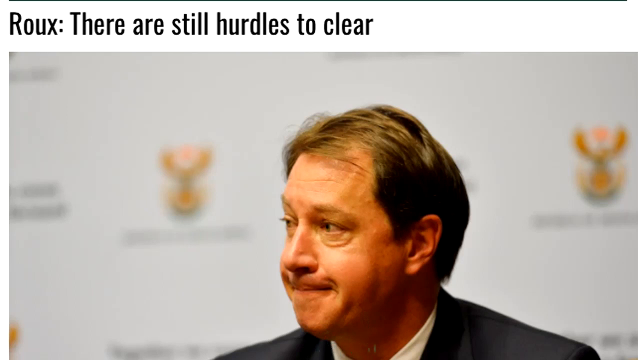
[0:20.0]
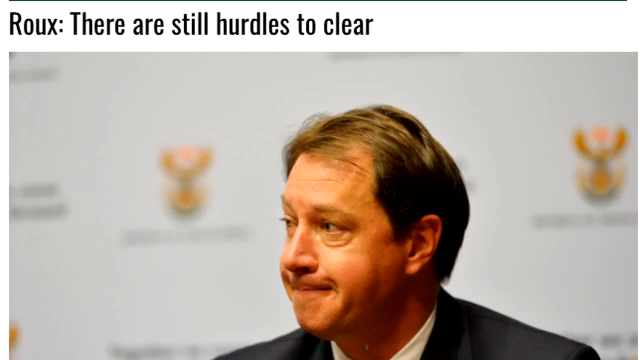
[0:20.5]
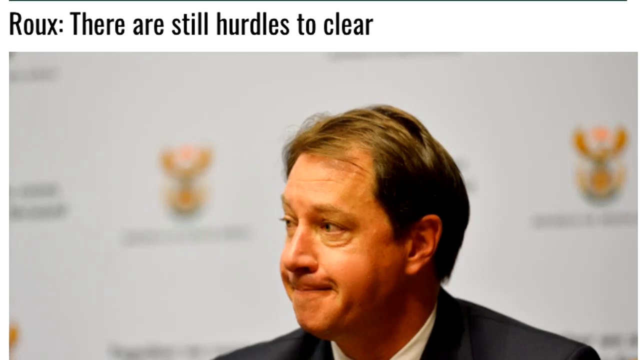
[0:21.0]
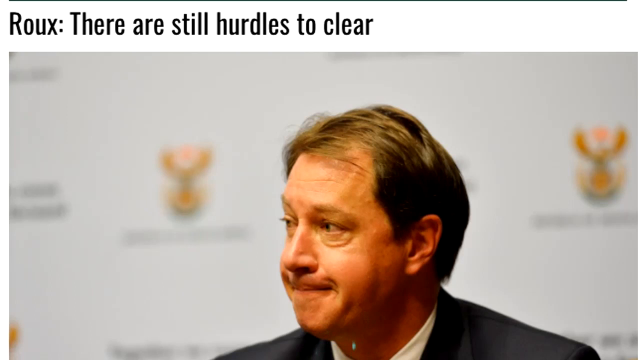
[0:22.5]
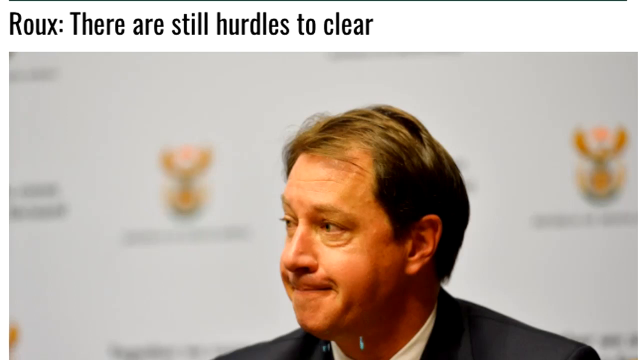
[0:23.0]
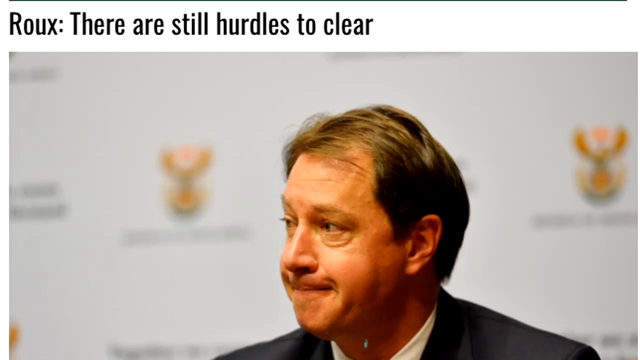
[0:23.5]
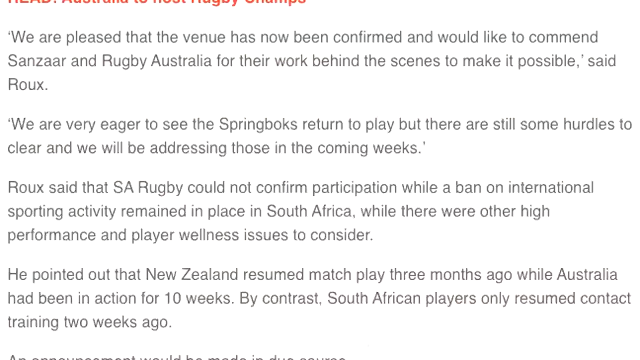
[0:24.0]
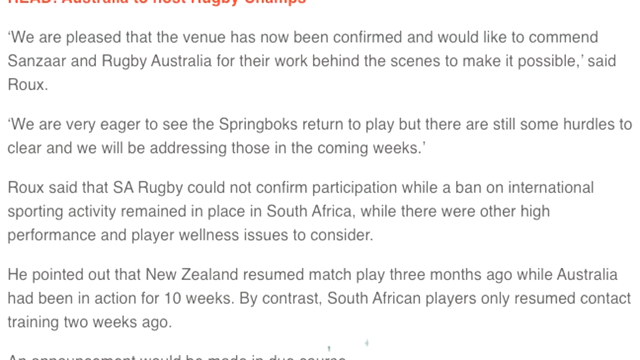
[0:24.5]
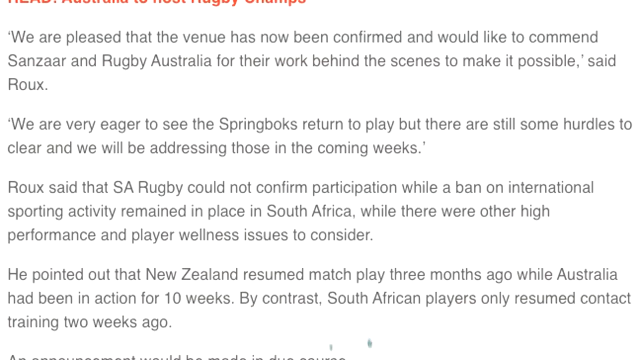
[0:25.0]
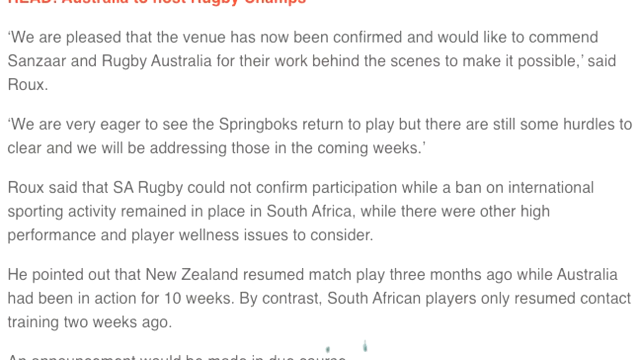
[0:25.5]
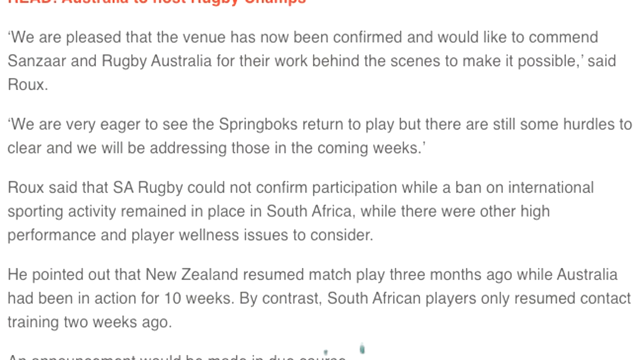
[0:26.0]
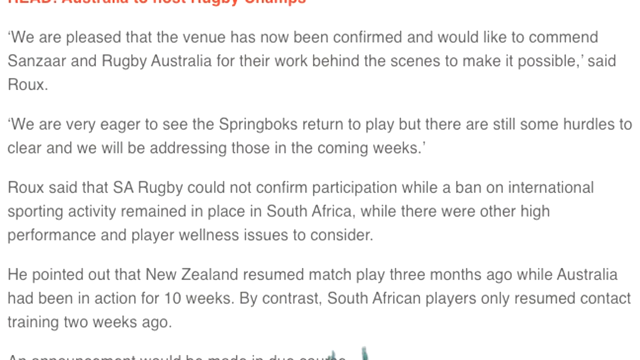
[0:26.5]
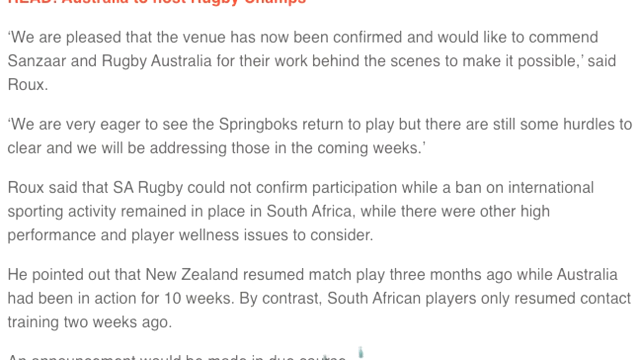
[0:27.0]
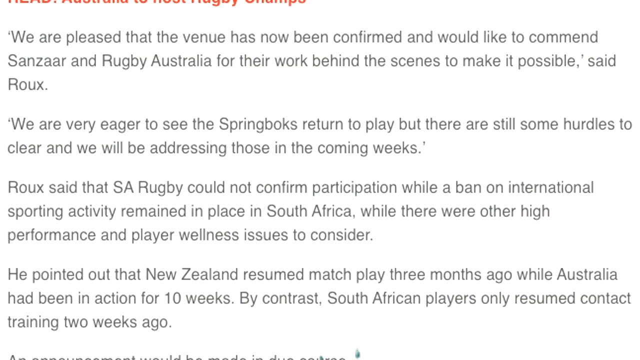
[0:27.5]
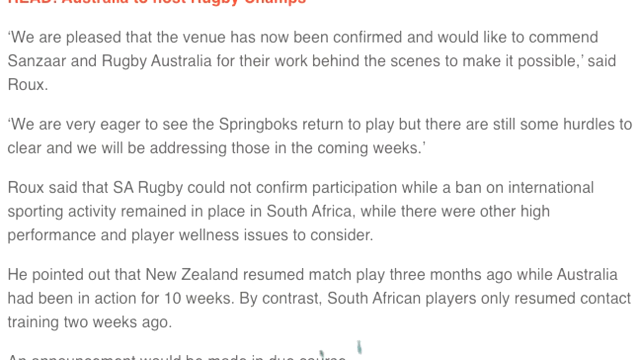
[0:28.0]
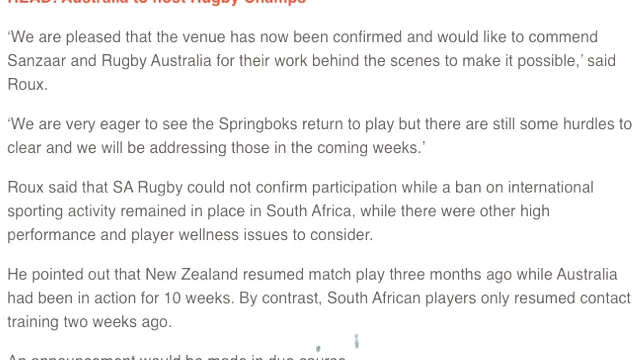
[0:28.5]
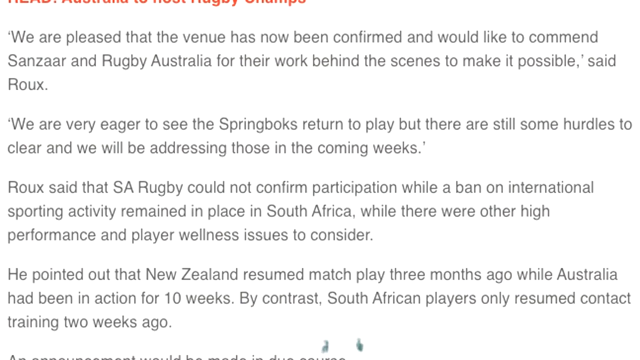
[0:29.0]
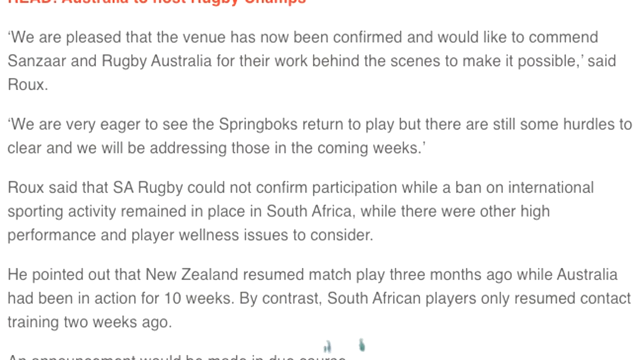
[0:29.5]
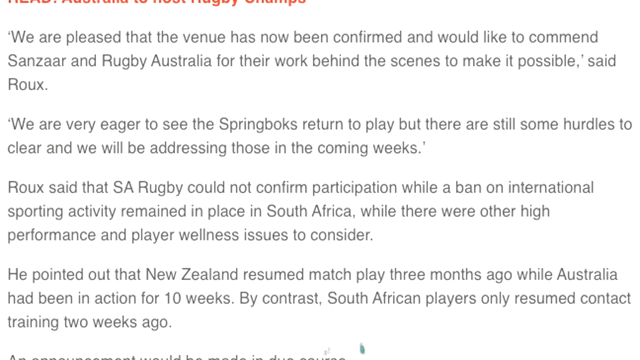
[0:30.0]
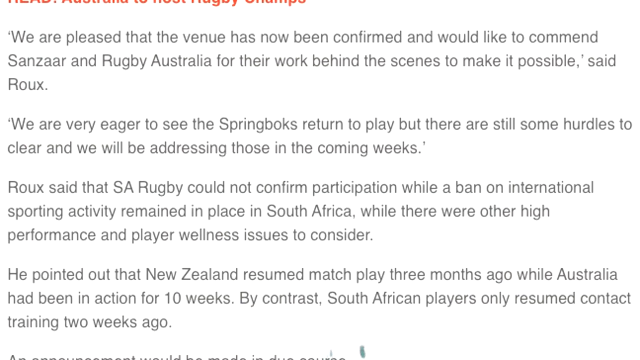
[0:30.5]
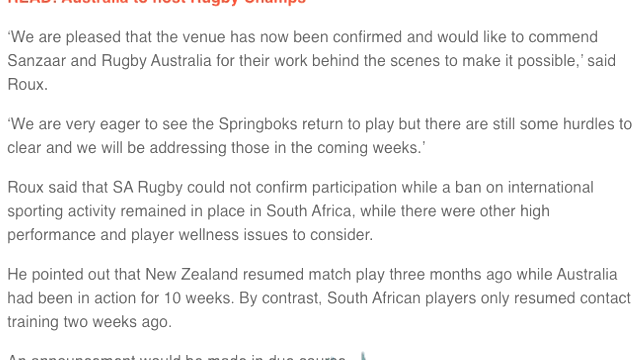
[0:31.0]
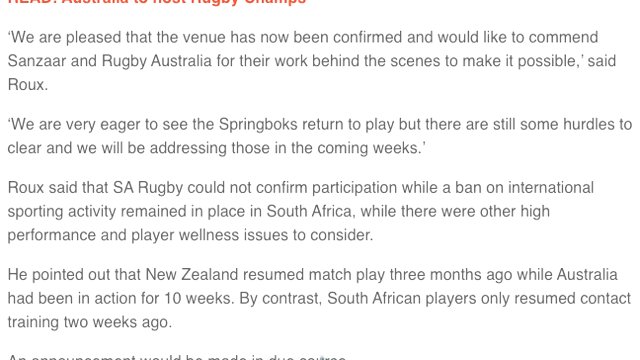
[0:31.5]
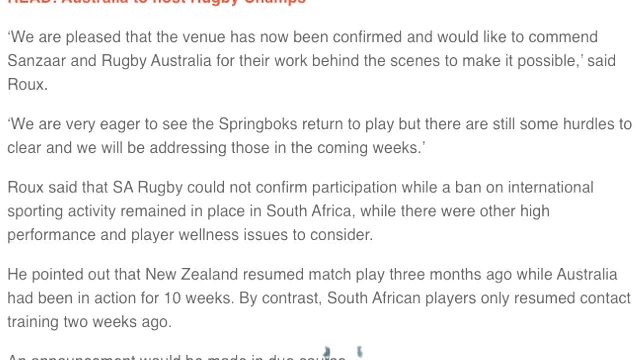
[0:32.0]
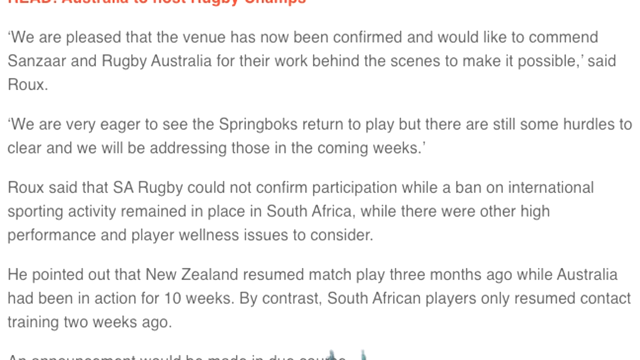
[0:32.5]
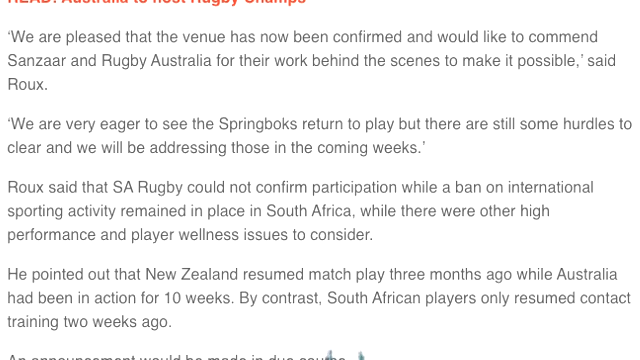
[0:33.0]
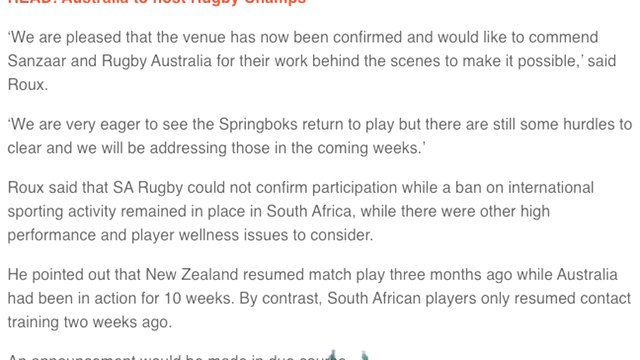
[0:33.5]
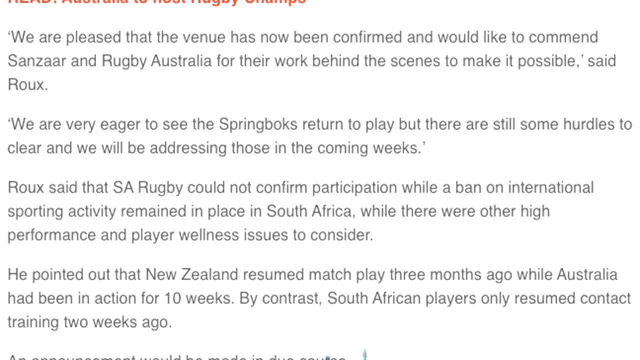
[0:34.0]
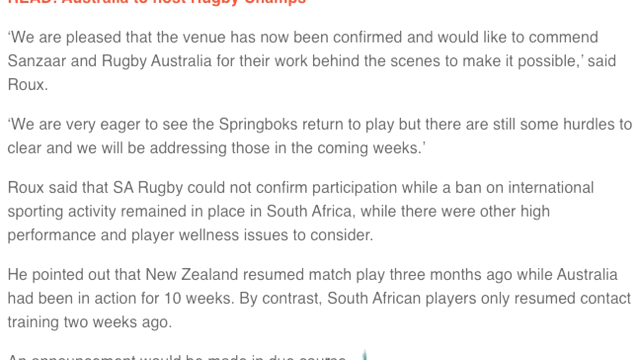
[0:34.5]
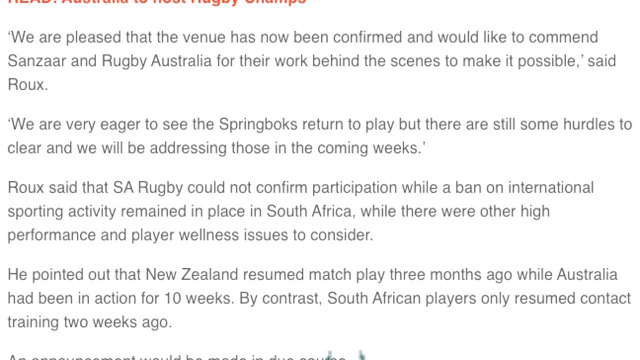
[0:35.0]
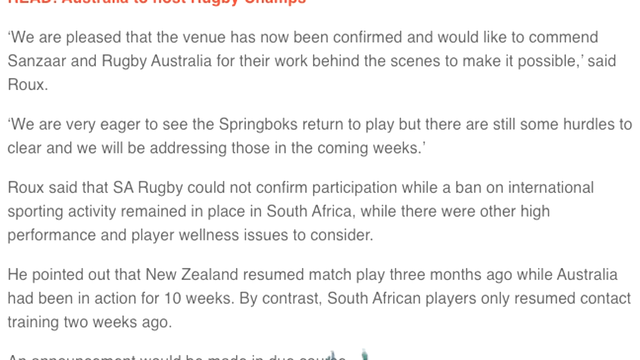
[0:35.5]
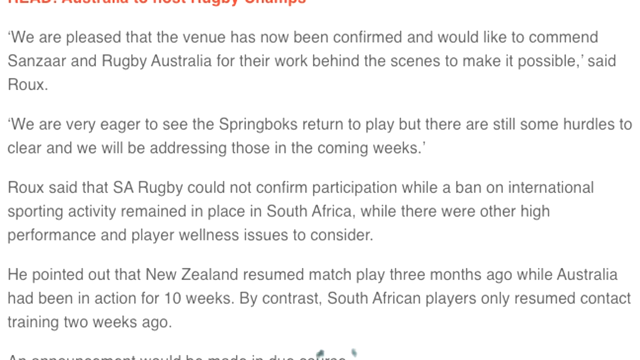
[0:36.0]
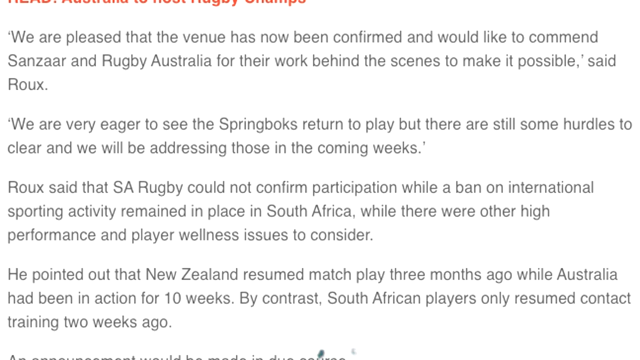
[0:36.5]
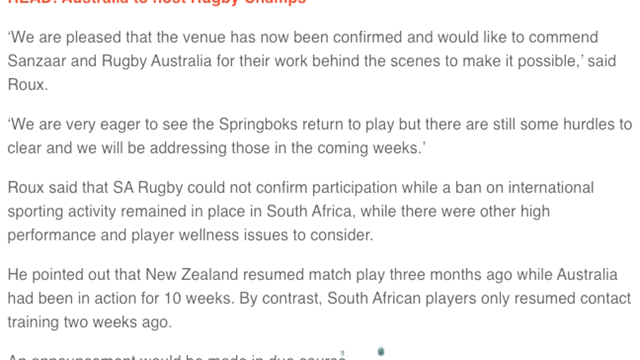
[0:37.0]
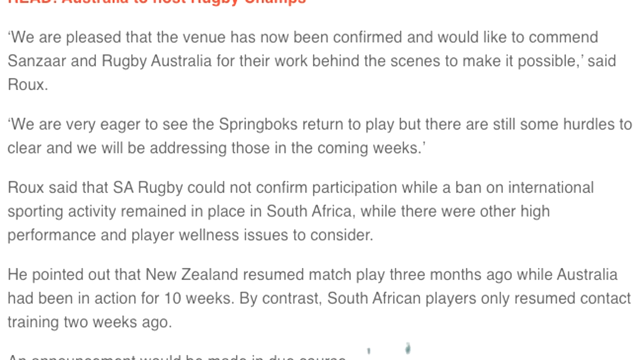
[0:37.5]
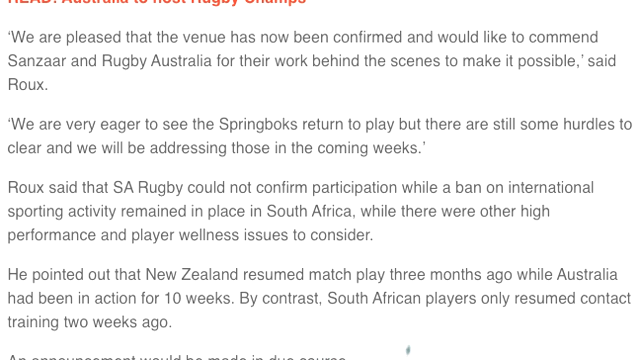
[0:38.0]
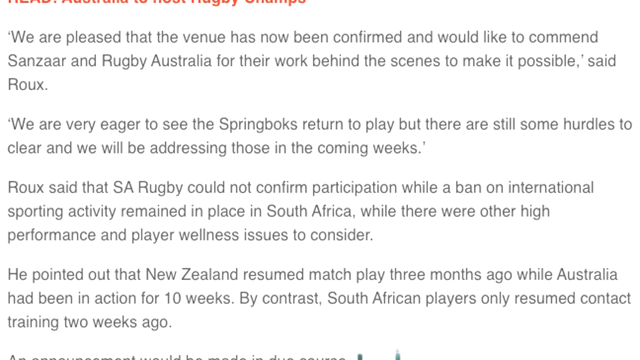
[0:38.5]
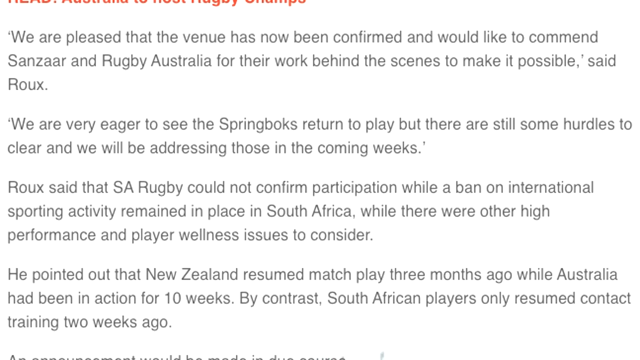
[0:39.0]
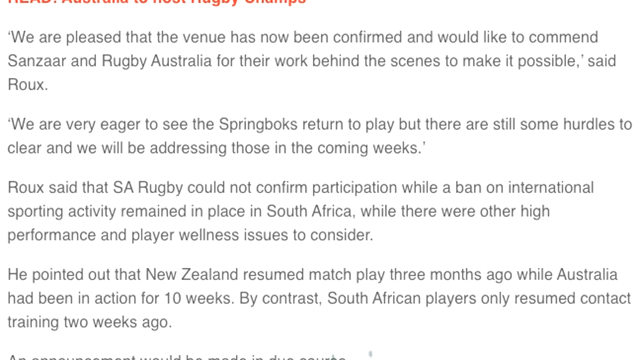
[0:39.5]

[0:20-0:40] The same static image remains. Above the man's head, text reads "Roux: there are still hurdles to clear." The same man is staring to the right. Text then pops up that says "We are pleased that the venue has now been confirmed and would like to commend Sanzar and Rugby Australia for their work behind the scenes to make it possible, said Roux. We are very eager for the spring box return to play, but there are still some hurdles to clear and we will be addressing those in the coming weeks. Roux said that SA Rugby could not confirm participation while a ban on international sporting activity remained in place in South Africa, while there were other high performance and player wellness issues to consider. He pointed out that New Zealand resumed match play three months ago, while Australia had been in action for 10 weeks. By contrast, South African players only resumed contact".